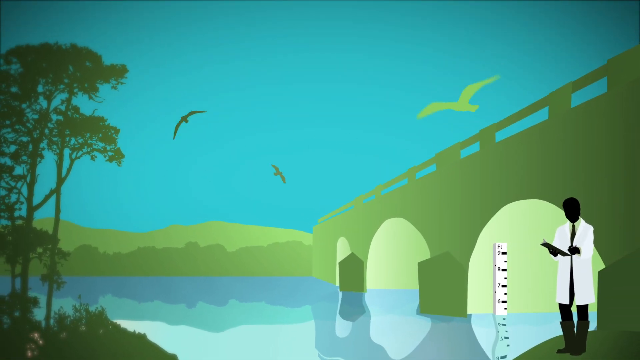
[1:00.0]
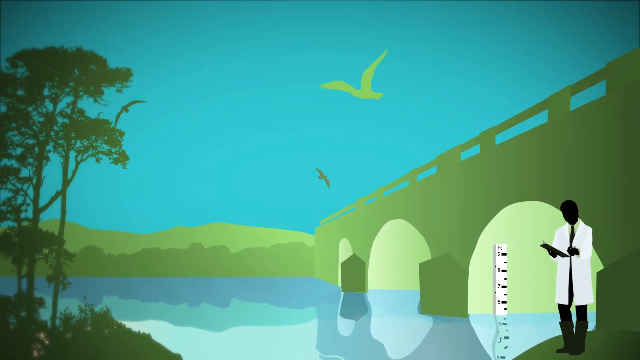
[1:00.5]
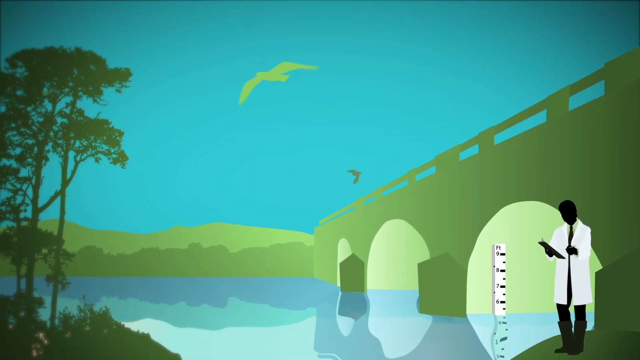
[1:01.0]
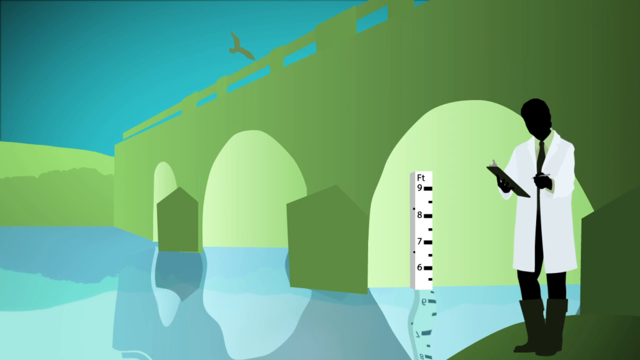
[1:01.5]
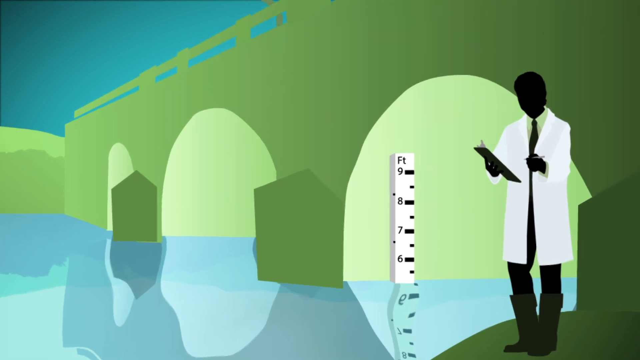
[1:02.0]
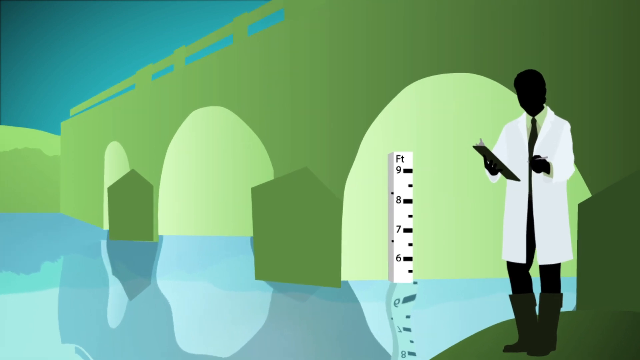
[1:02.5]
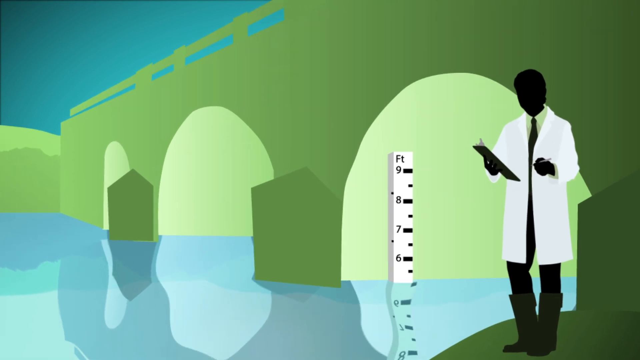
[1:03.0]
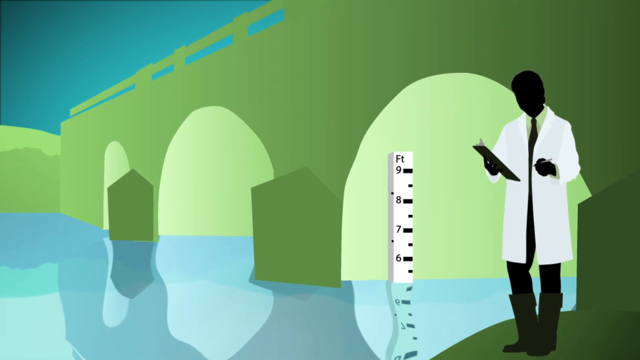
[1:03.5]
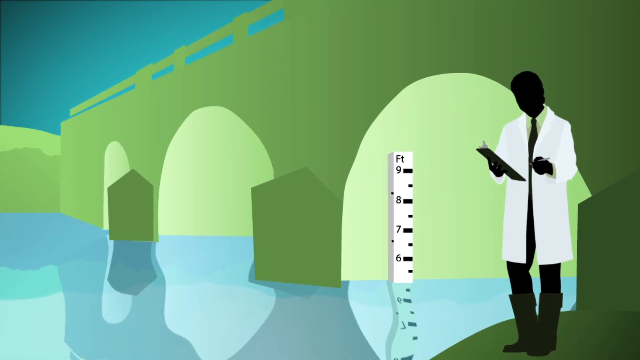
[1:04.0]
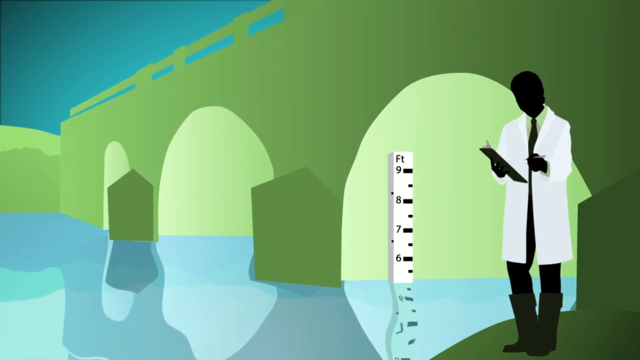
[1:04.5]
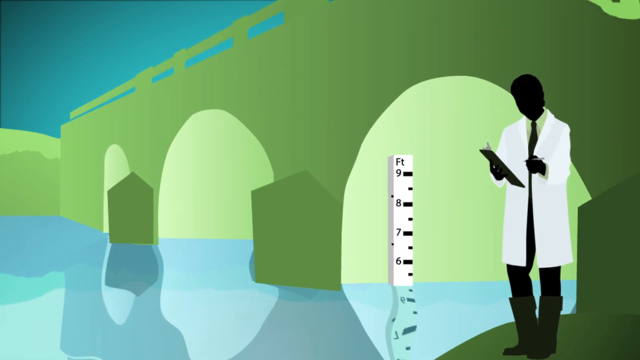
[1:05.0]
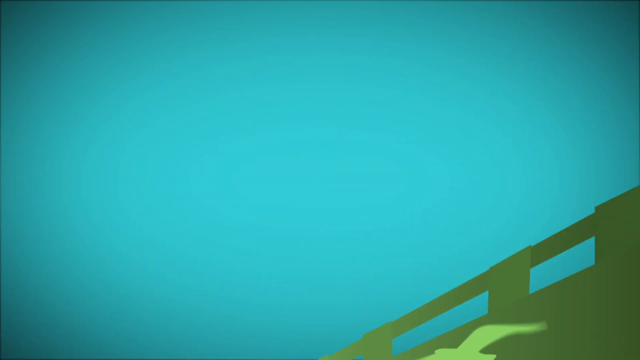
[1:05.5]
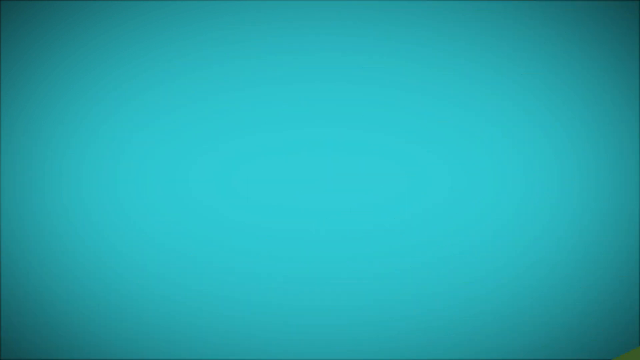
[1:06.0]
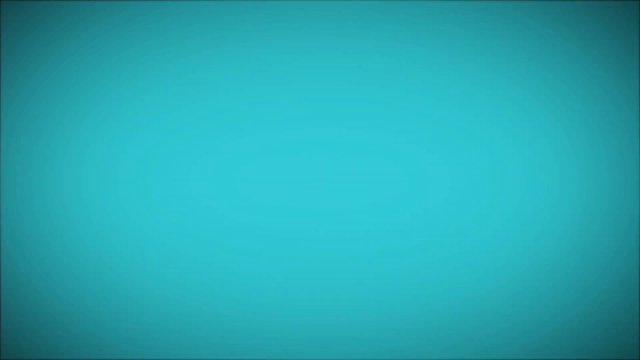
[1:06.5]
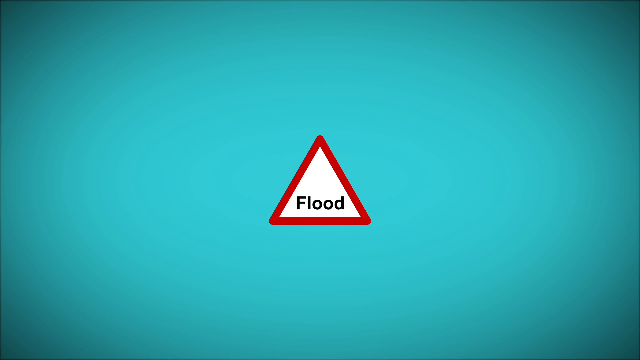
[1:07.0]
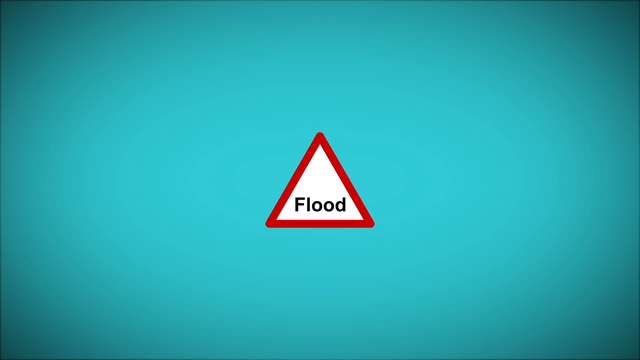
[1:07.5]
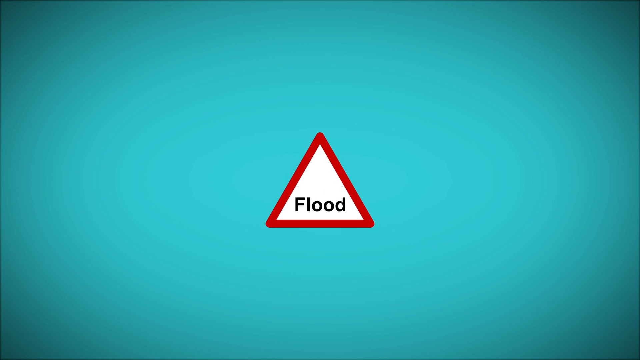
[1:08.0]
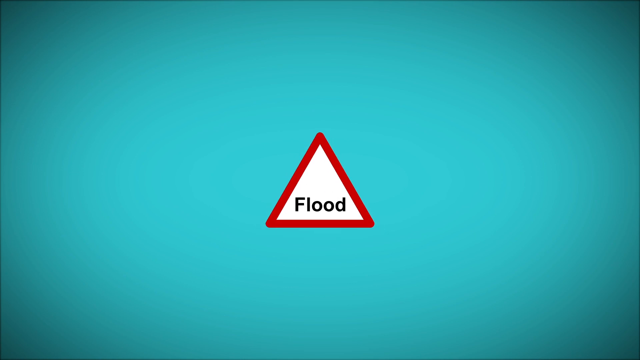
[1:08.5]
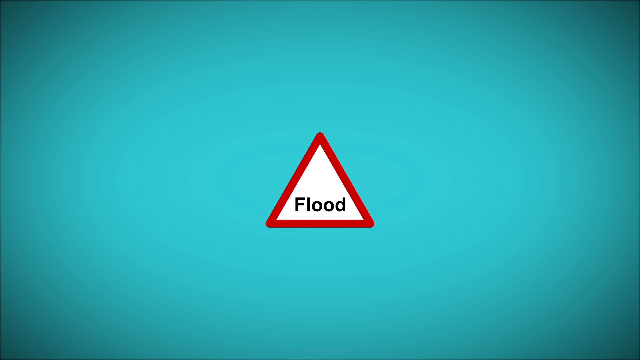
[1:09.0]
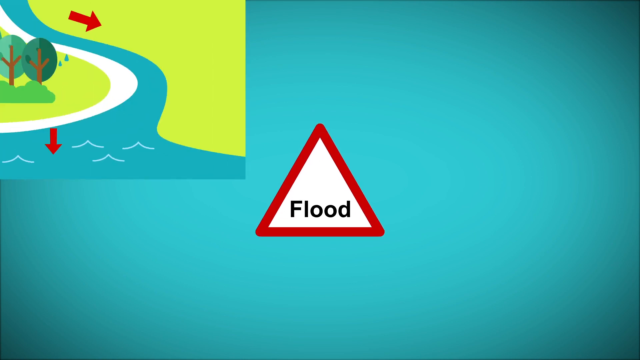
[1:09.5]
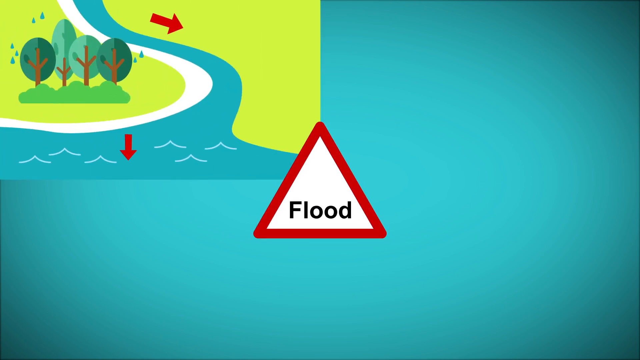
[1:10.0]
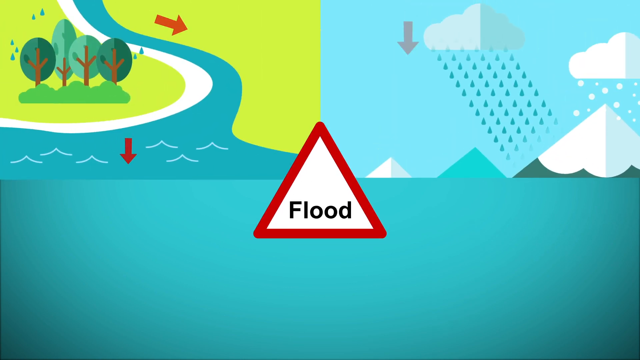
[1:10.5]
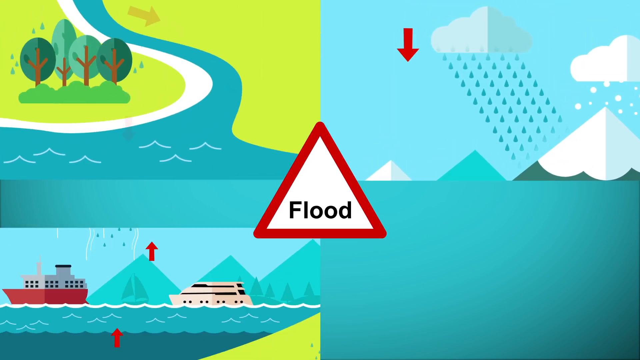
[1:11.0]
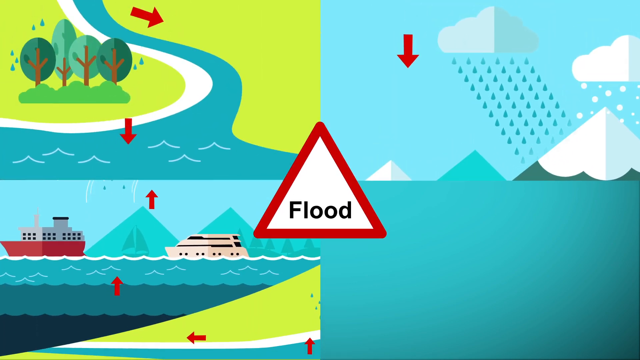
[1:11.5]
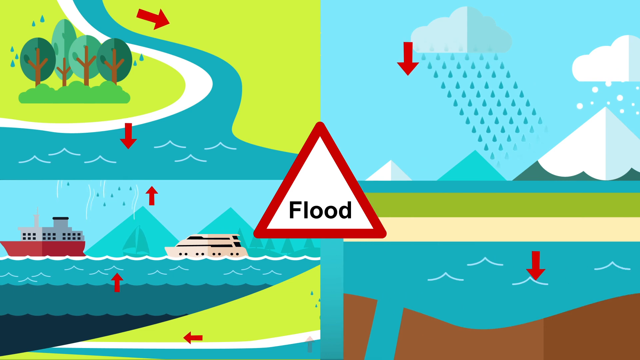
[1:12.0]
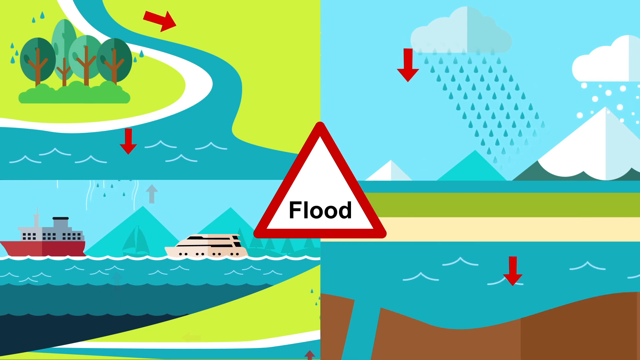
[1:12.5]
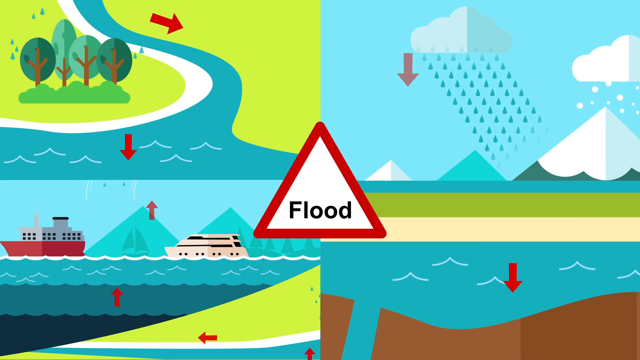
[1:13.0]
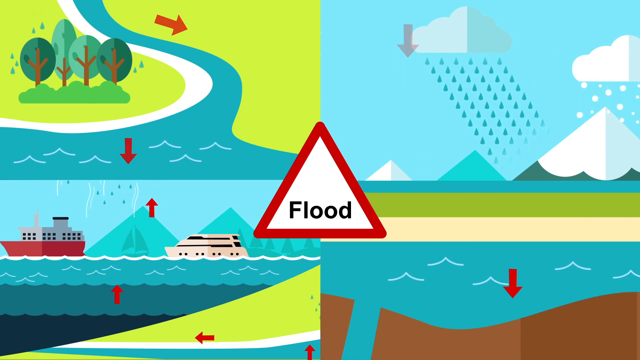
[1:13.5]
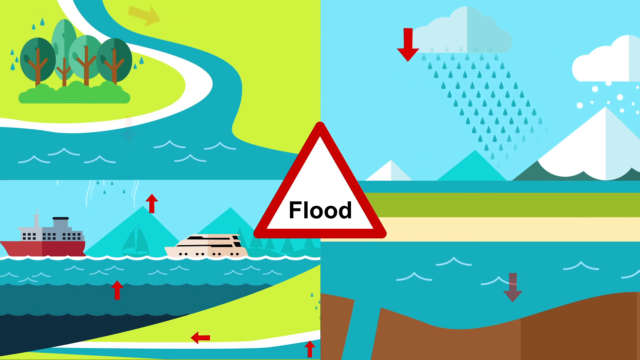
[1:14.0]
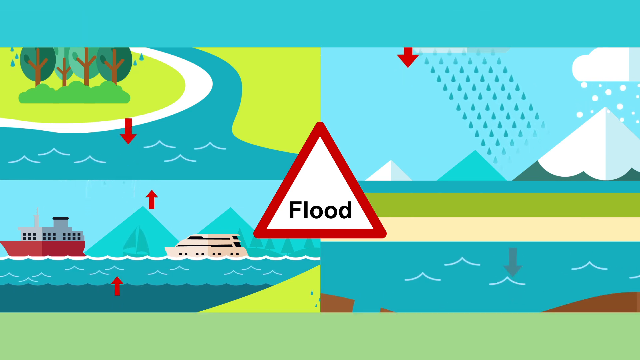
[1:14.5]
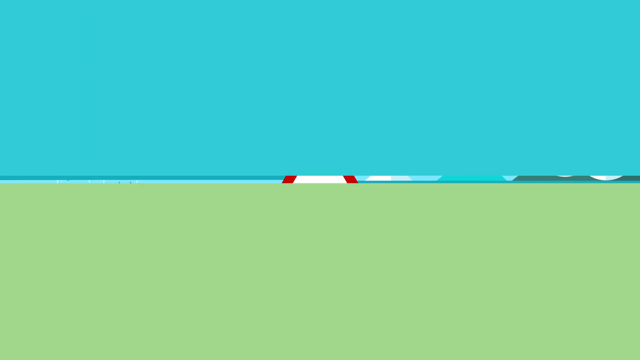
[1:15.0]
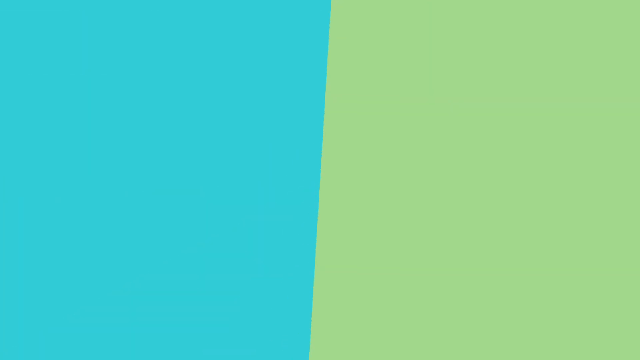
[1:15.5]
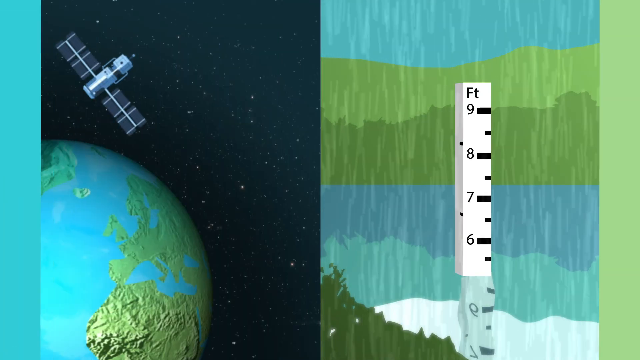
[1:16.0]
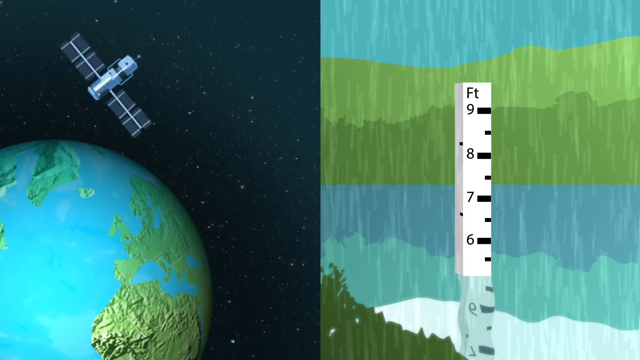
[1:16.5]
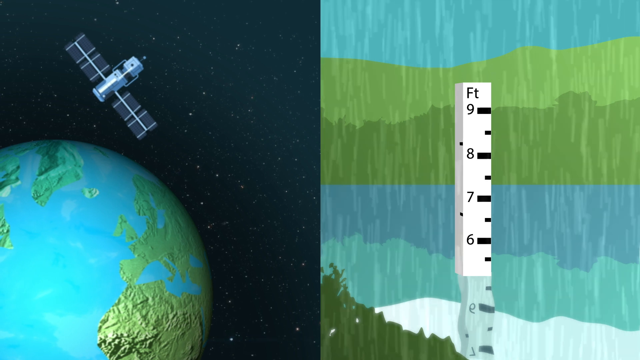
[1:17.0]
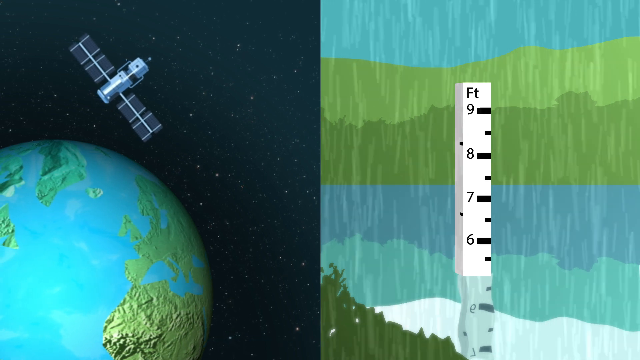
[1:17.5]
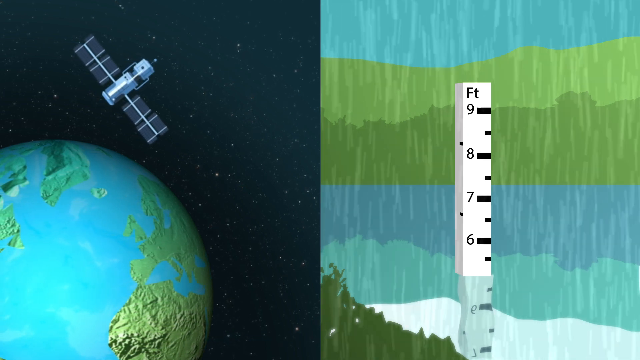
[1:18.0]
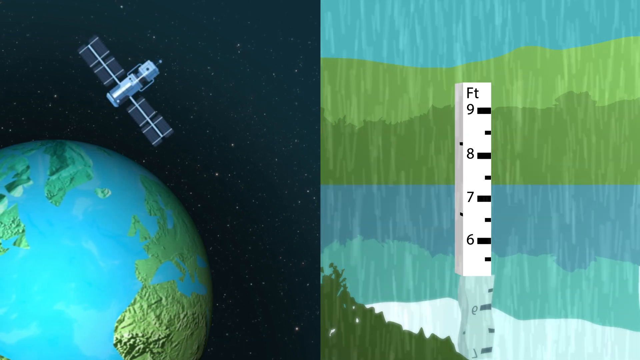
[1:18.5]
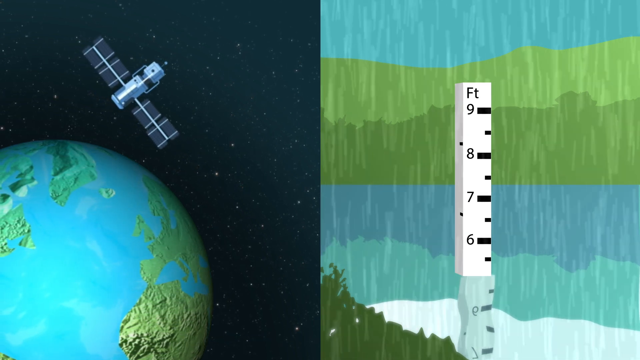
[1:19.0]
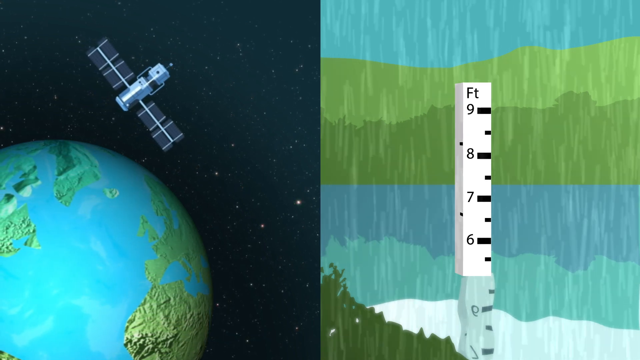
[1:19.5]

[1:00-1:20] A cartoon-style scene shows a man in a white coat on the far right, holding a clipboard and writing. His face, arms and legs are all black, and he is standing in front of a yellow bridge. Within the bridge is a height measure: the water appears to be at about five feet, and the ruler rises to nine feet, showing six, seven, eight and nine feet. Blue water is underneath the bridge and the sky is also blue, all very cartoonish. Light green birds fly across the screen. Next comes a blue screen with the red triangle containing a white triangle and the word "flood" in the middle, and four cartoon-style pictures come in from different directions. On the left, a river flows down a grassy area, with red arrows pointing down along the shape of the river and within it. On the right is a sky with rain and snow falling on a mountain. On the bottom left is the ocean with a red and gray ship and a white ship, with arrows pointing up as if water is being taken up into the clouds. On the bottom right is what looks like maybe an underground water area, showing water and what appears to be ground, with a red arrow pointing down. The view then switches to a split screen: on the left is the Earth with a satellite above it against a dark night sky; on the right is a measuring stick sticking up in the water, with the water a little above five feet and marks for six, seven, eight and nine feet. The bottom half of that background is blue and most of the top half is green, with some sky visible, and it is clearly meant to be raining.